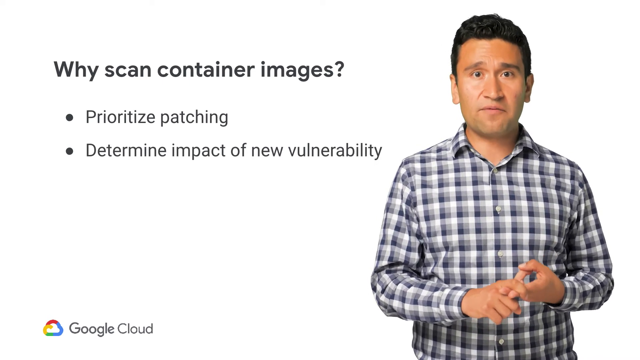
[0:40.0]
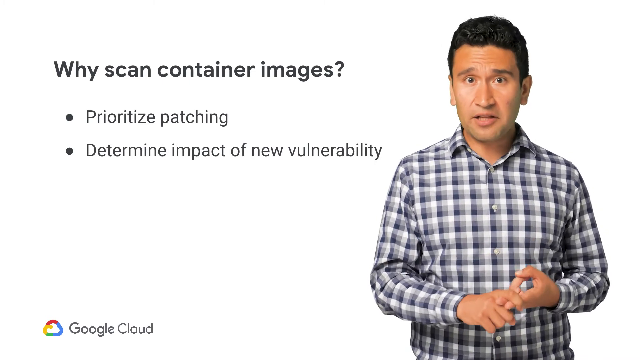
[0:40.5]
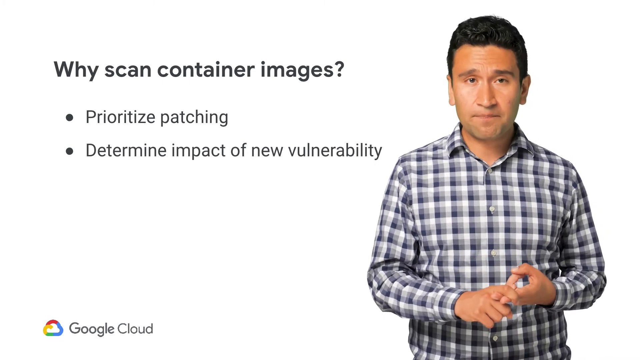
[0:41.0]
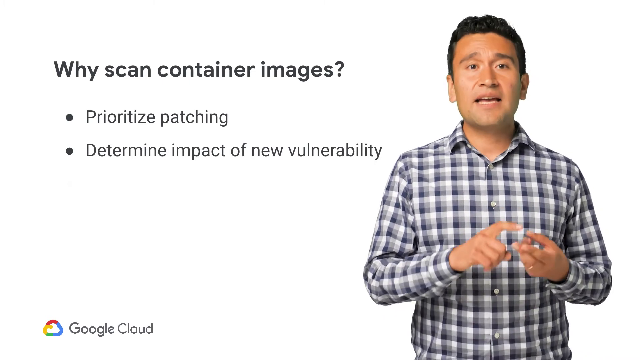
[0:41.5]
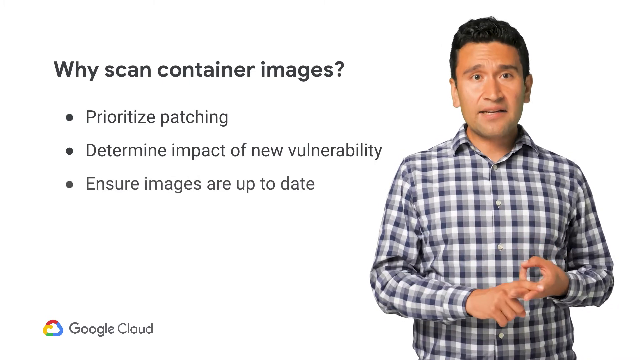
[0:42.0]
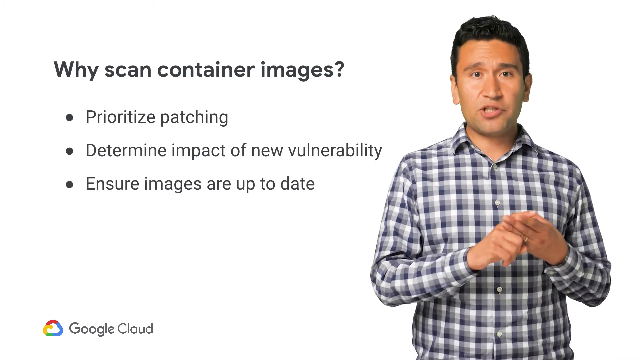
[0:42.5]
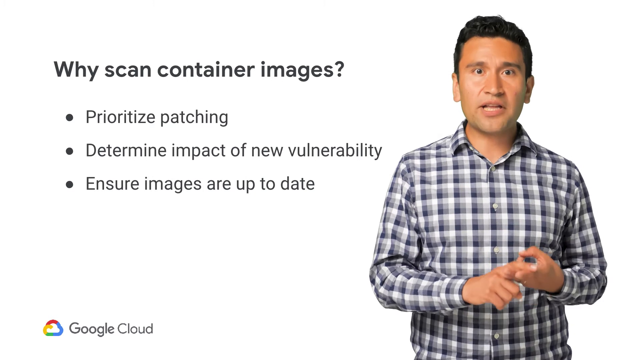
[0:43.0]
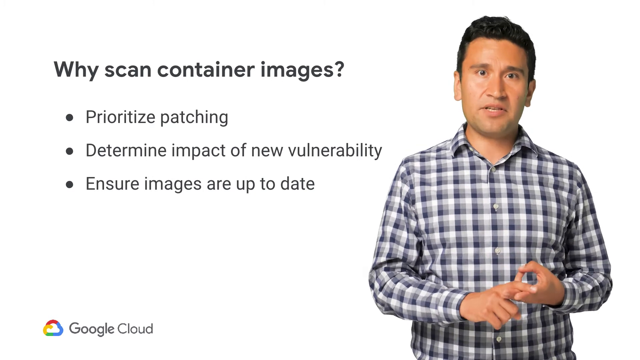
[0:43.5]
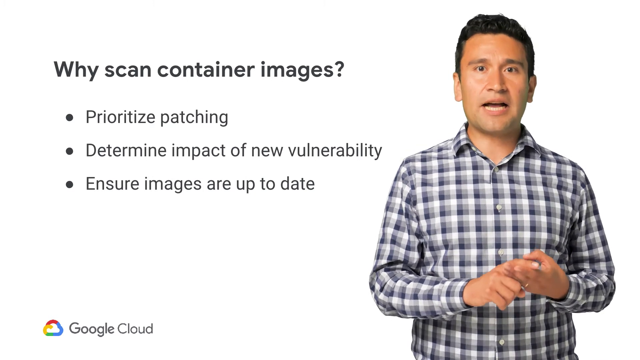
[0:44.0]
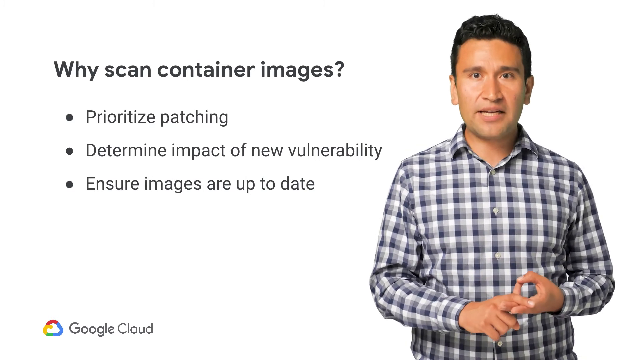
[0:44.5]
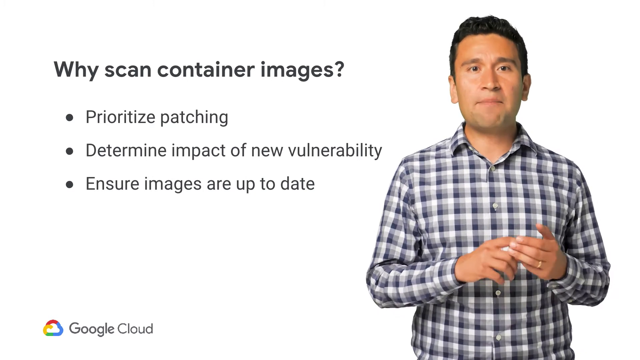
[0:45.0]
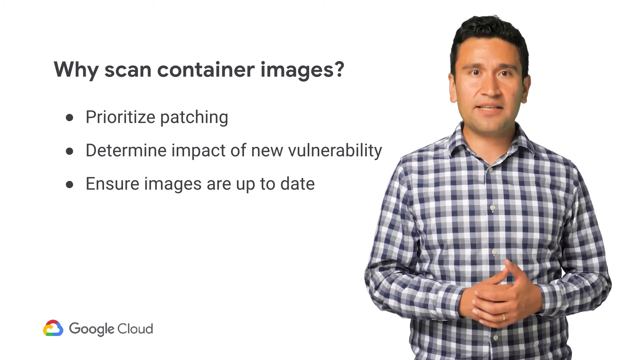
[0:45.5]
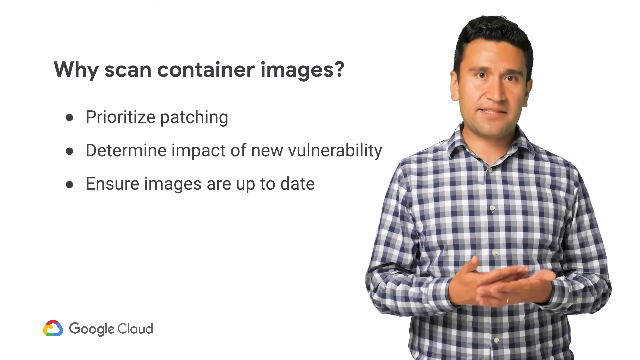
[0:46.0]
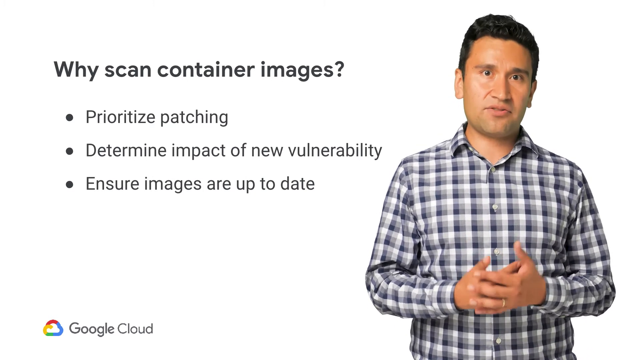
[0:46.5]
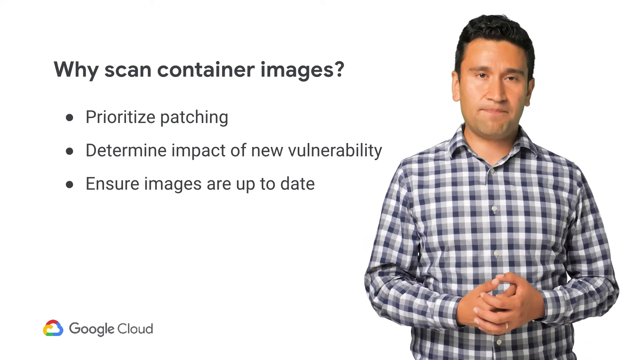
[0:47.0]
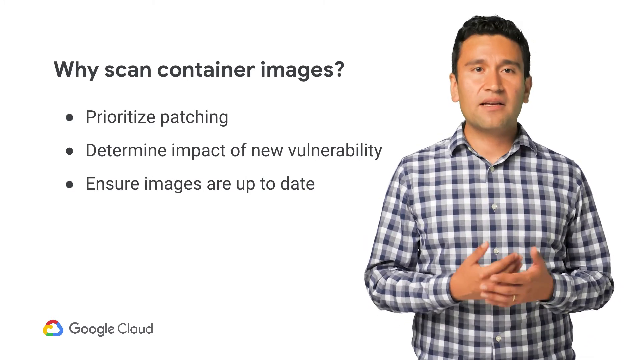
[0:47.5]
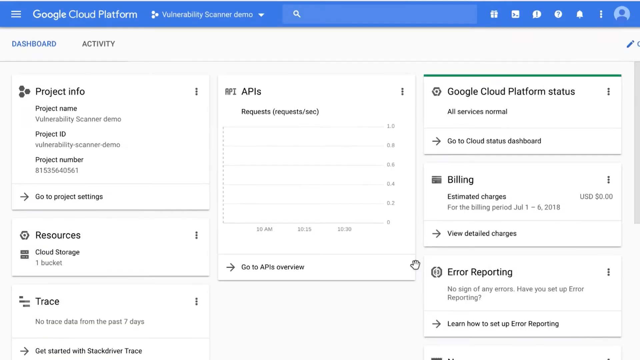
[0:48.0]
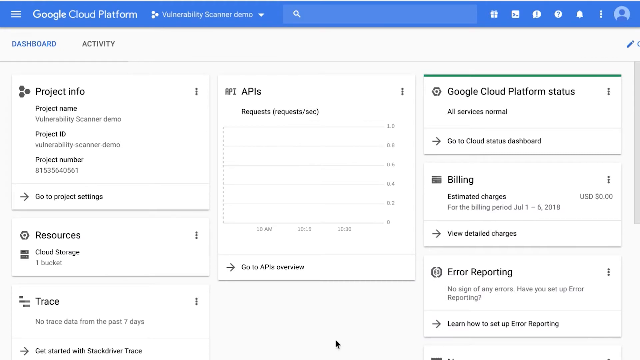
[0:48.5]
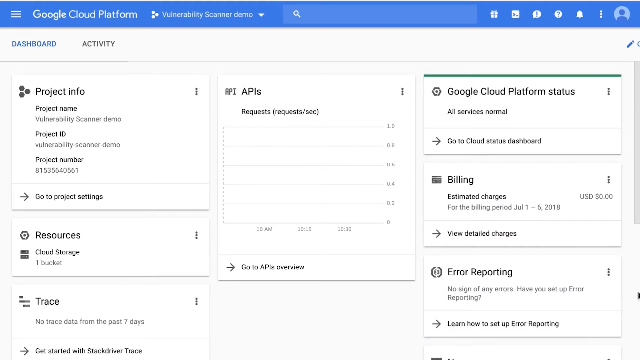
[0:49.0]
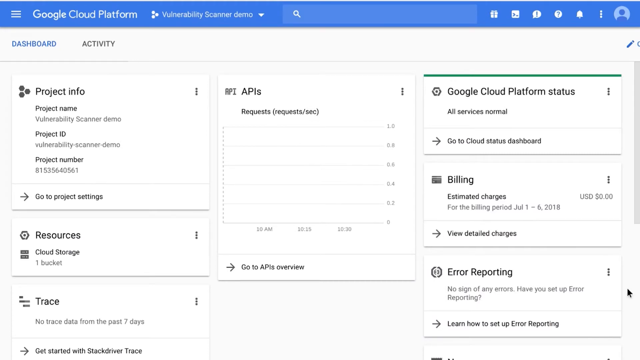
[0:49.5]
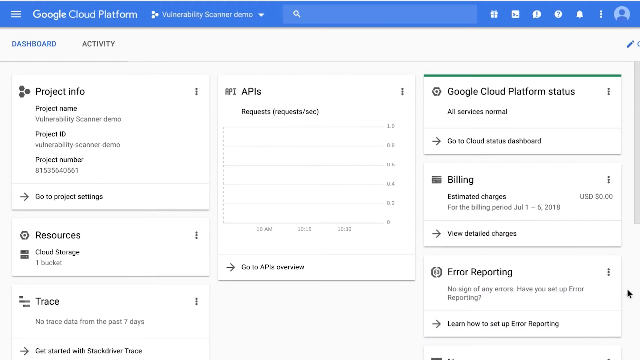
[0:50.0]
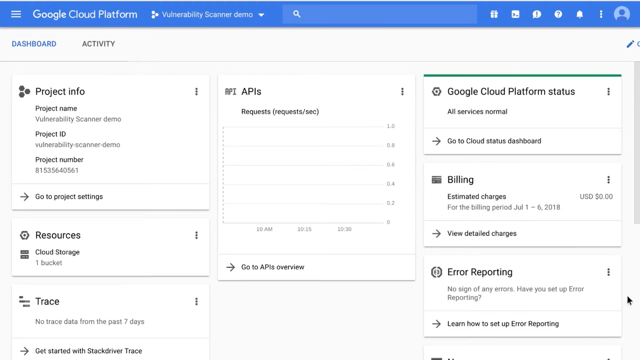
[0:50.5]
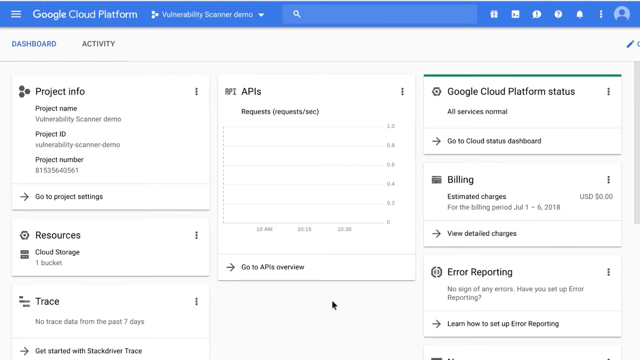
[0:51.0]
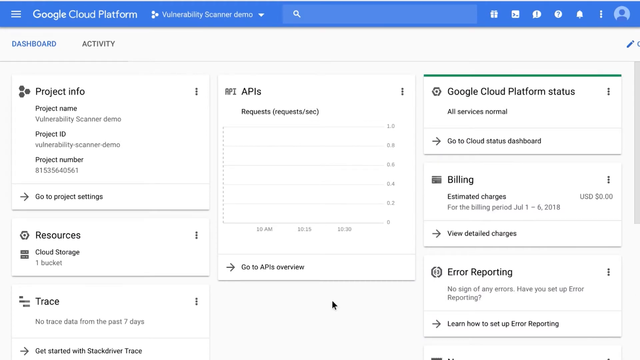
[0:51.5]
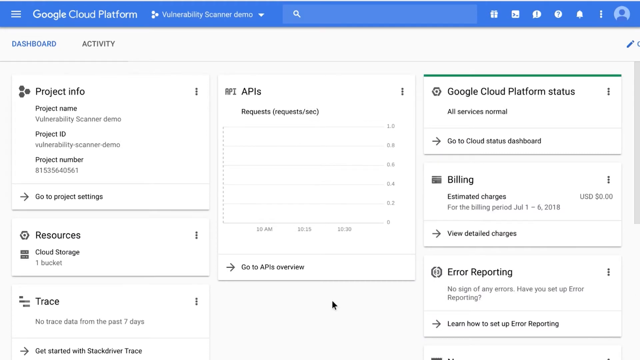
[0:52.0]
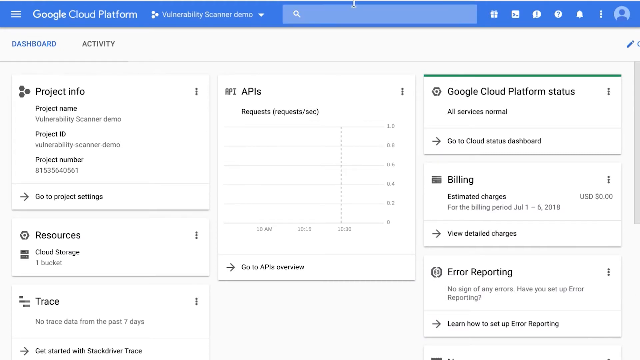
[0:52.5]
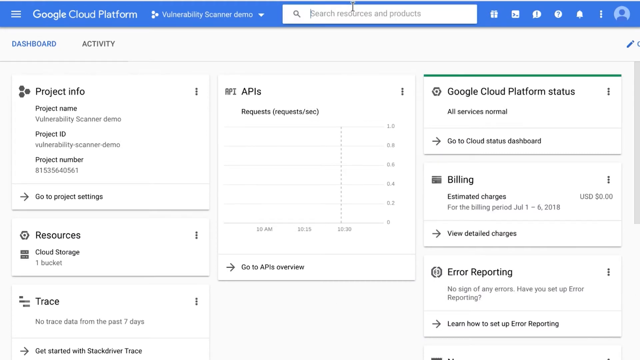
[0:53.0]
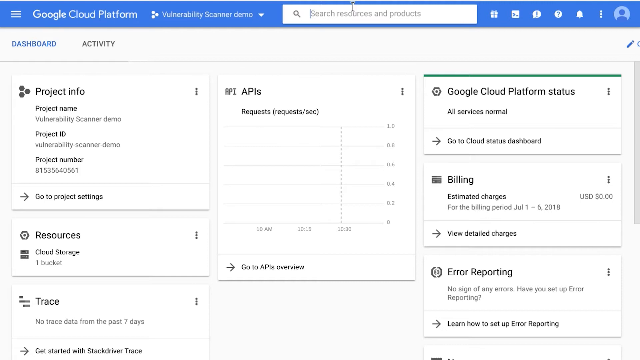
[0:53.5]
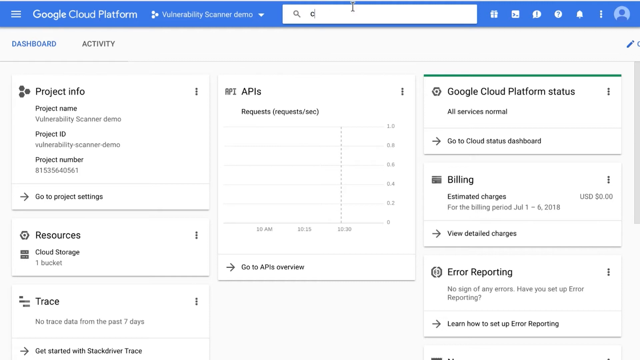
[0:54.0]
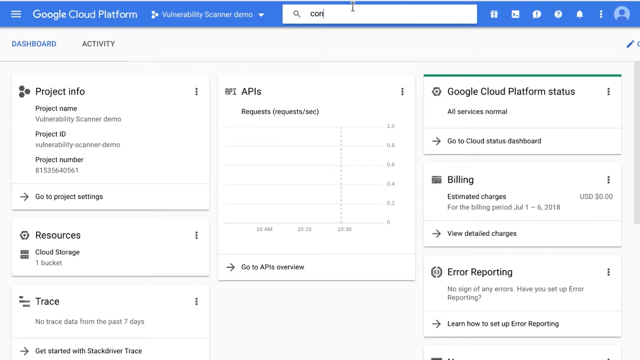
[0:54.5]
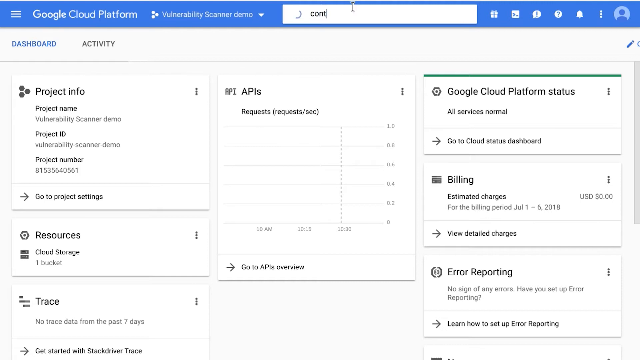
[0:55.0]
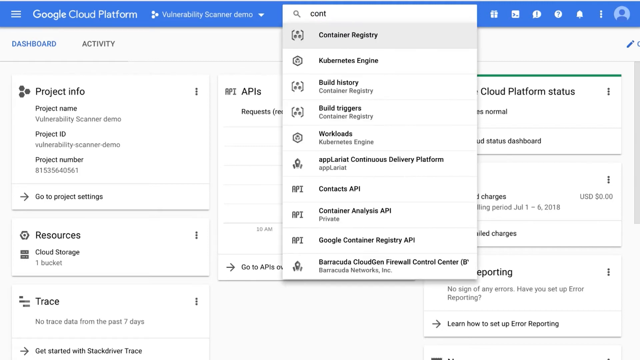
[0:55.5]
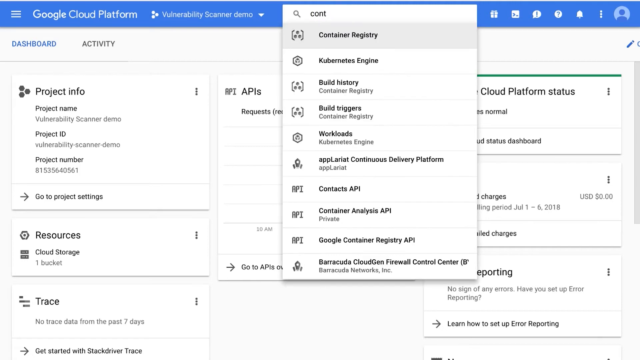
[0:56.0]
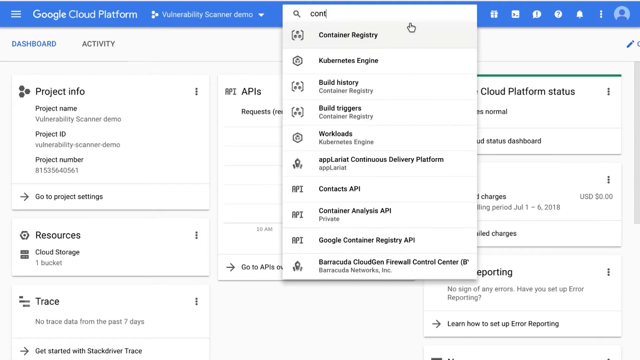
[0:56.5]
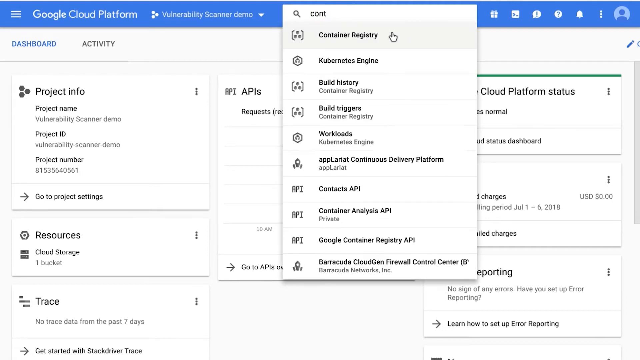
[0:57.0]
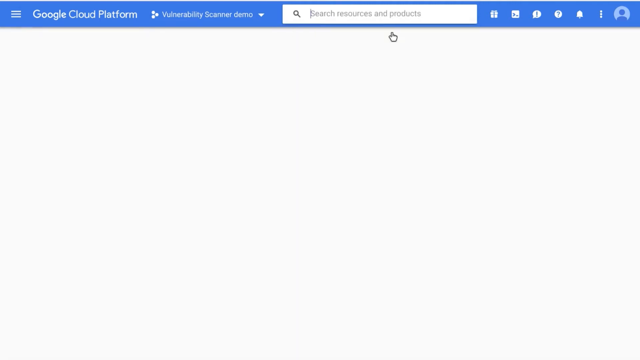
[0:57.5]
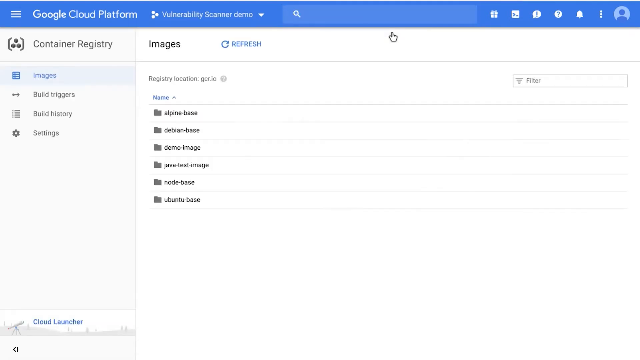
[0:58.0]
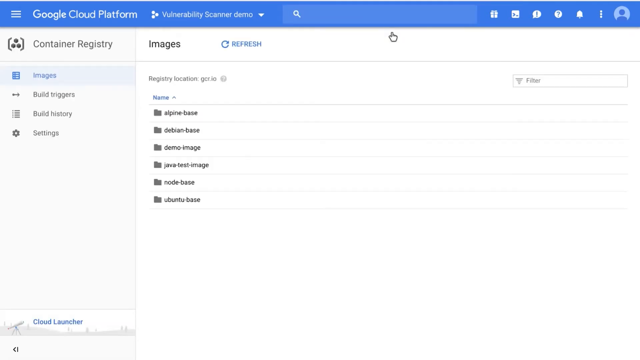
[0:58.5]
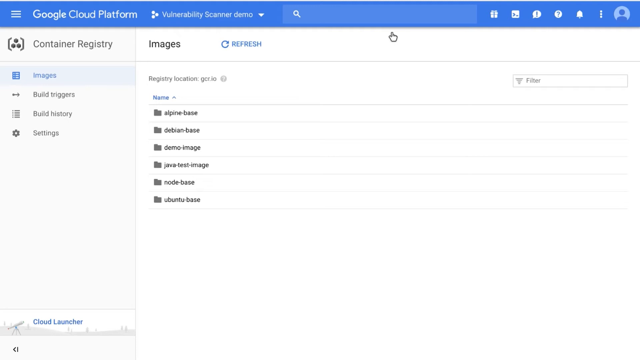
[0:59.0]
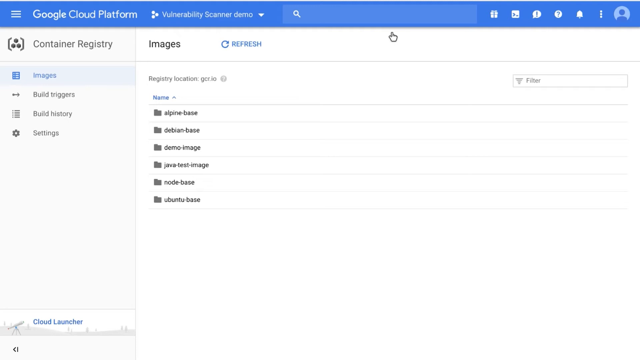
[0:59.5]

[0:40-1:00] Against a white background, text is on the left side of the screen and a man is on the right, seen from the waist up, facing and looking directly at the camera. He wears a long-sleeved plaid button-up shirt in tones of gray, black, and white, and has short, dark brown, almost black hair and no facial hair. He holds his hands in front of his midsection as he talks and looks like he is sort of counting off on his fingers, using his hands while he speaks. On the left, larger black print reads "why scan container images?" Underneath is a list of bullet points, the first reading "prioritize patching," with a line below it reading "determine impact of new vulnerability"; this text is smaller and less bold than the heading. A new line appears under the bullet points, reading "ensure images are up to date." Then a screenshot of a website appears, with a blue line across the top reading "Google Cloud Platform" and sections labeled "Project Info," "Resources," "APIs," "Google Cloud Platform Status," "Billing" and "Error Reporting," all in black text on a white background. The letters C-O-N-T are typed into the search bar.